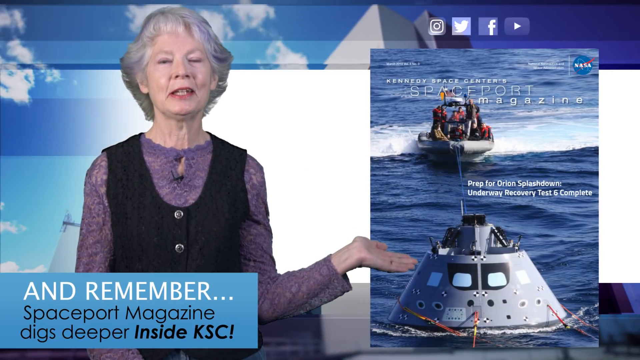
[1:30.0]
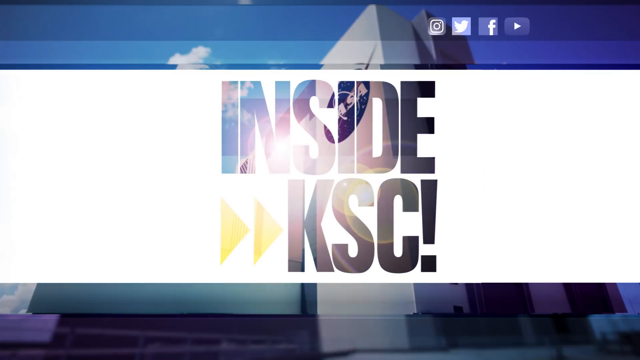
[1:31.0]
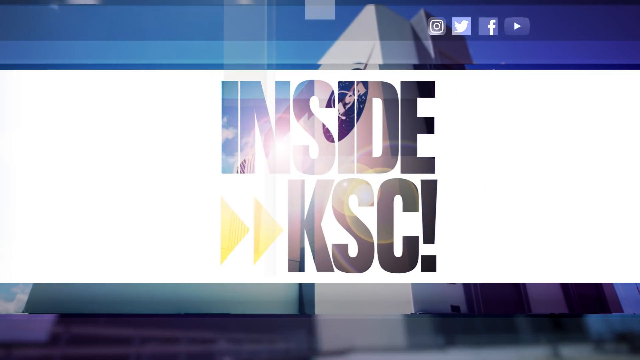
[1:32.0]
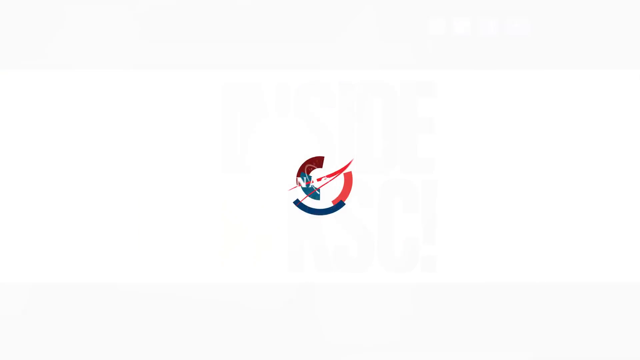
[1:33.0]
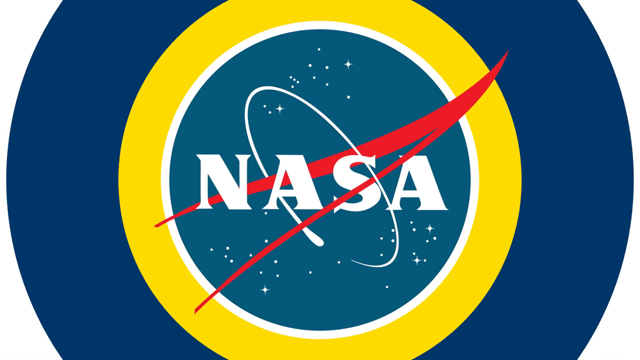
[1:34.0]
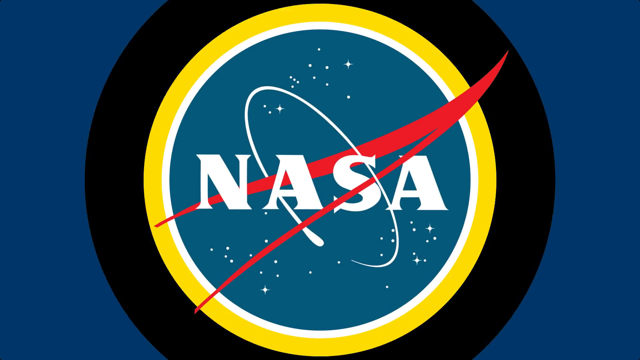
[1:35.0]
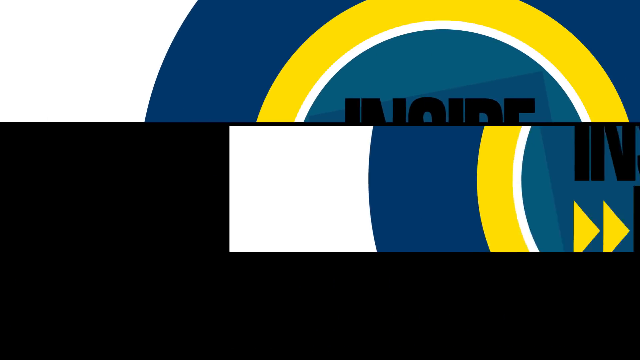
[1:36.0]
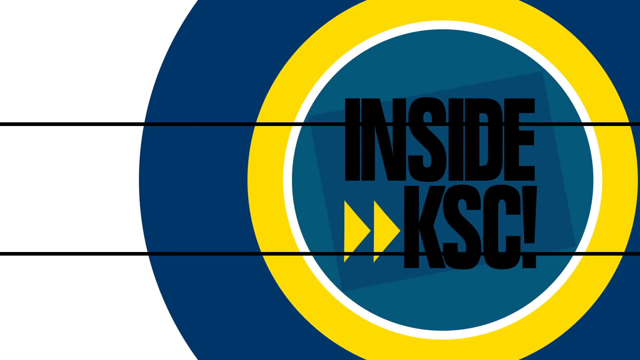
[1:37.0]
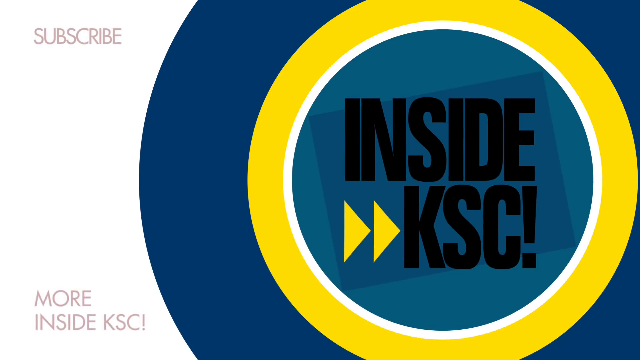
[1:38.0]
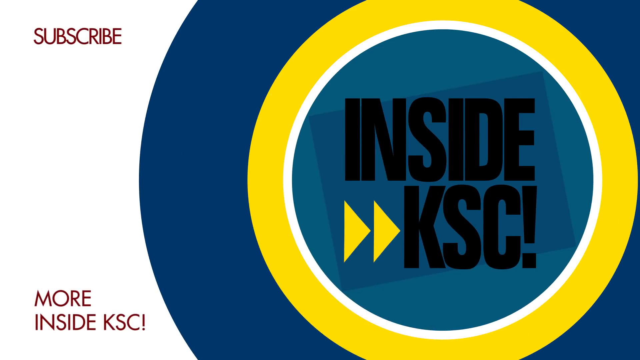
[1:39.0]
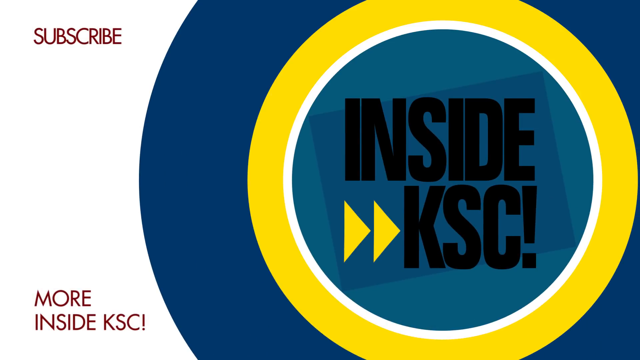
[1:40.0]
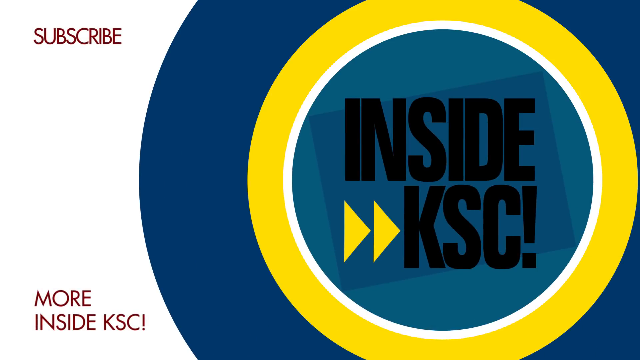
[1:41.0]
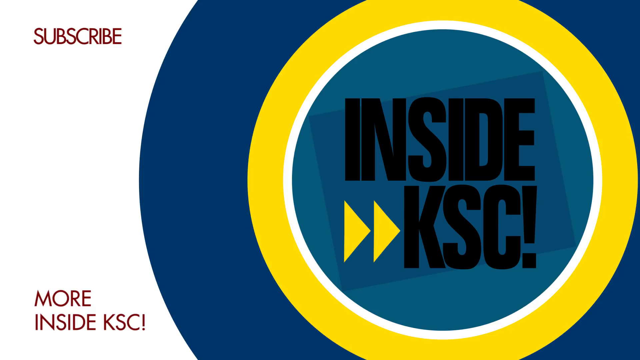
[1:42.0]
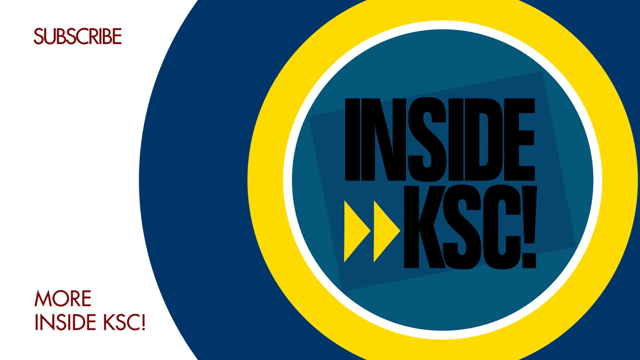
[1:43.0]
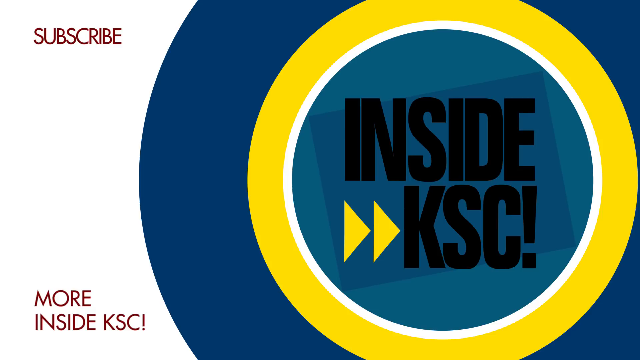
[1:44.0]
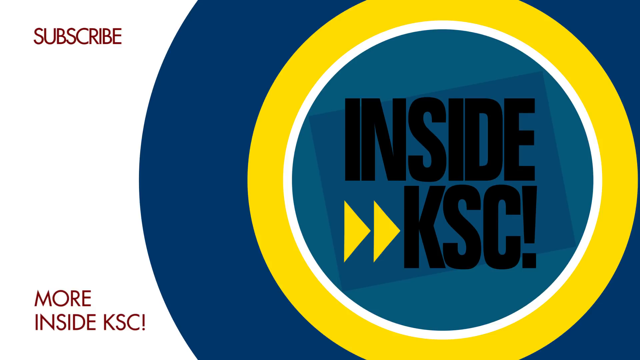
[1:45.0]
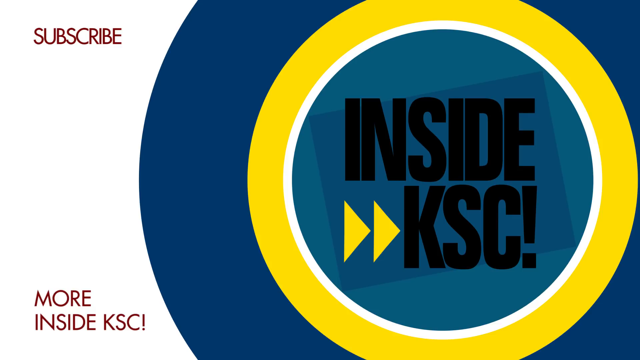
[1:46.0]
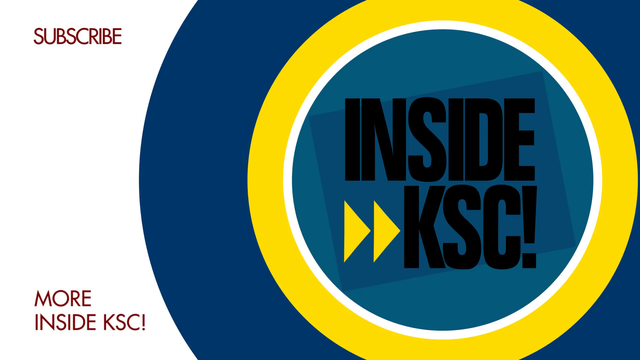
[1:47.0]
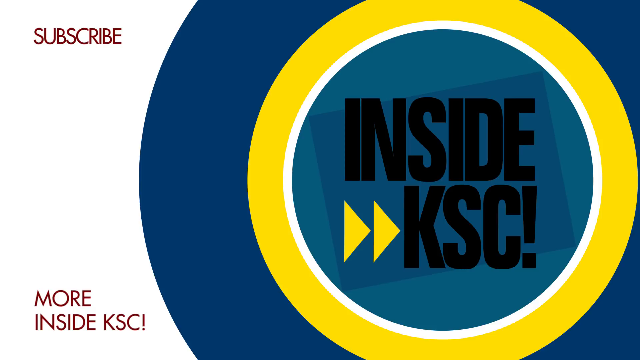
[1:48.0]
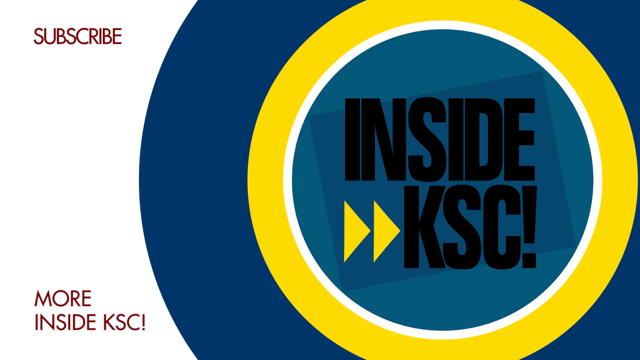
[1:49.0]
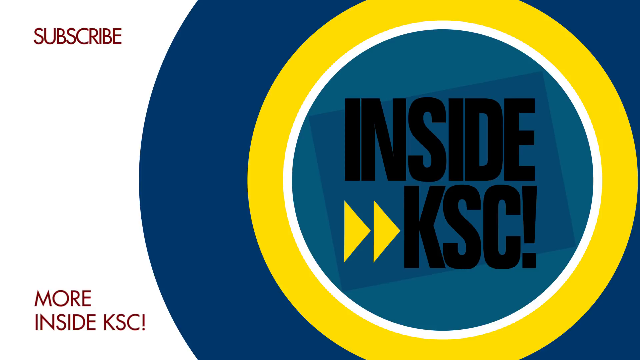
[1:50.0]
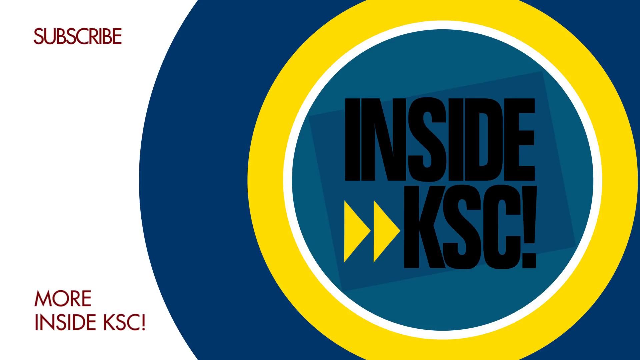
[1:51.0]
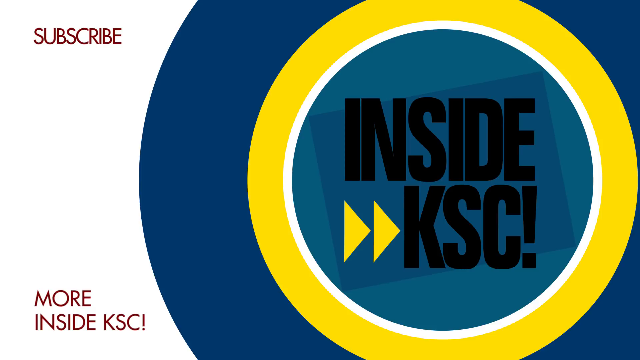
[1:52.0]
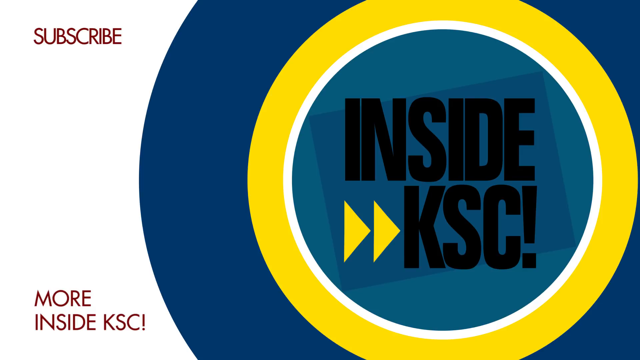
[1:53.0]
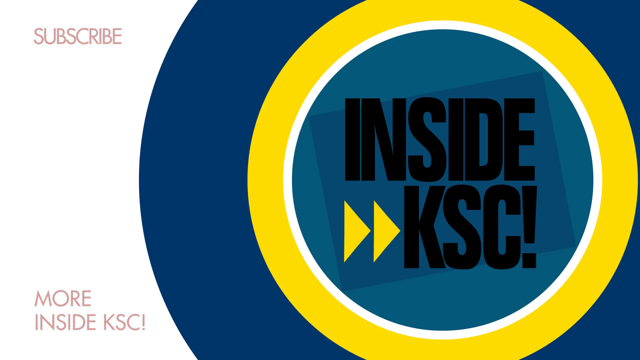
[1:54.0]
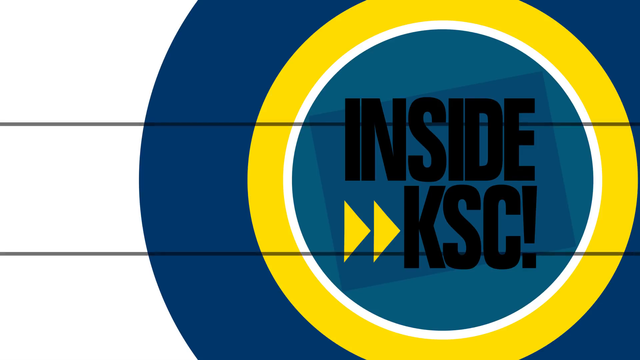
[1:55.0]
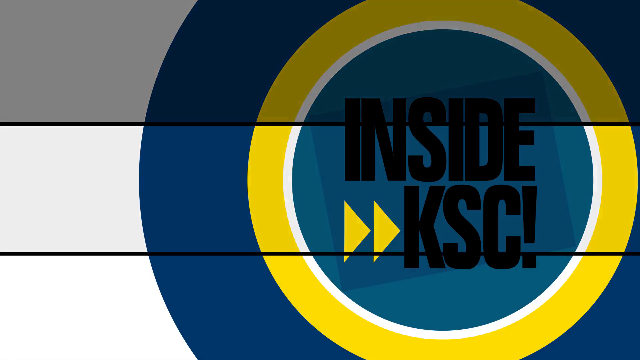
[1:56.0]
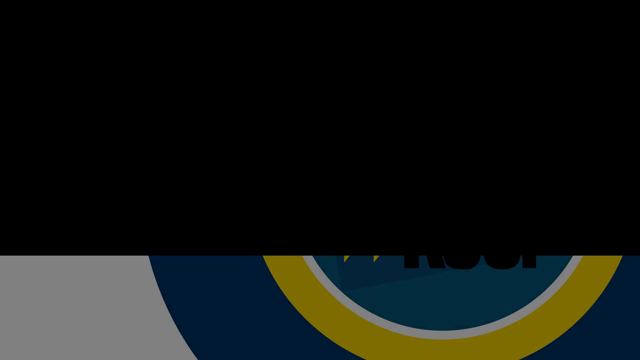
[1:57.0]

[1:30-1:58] The older woman is on the left with a blue green-screen background behind her. The video cuts to a white rectangular box in the middle of the screen with the text "inside KSC!" The text is transparent, showing a background image behind it that appears to be some sort of rocket. Next, a white screen shows the NASA logo in the center, surrounded by a thin white circle, a slightly larger yellow circle, and a much larger blue circle. Then another screen appears with white on the left and right and the text "inside KSC" surrounded by a light blue circle, a white circle, a yellow circle, and a dark blue circle. This screen stays up for quite a while and seems to be an end screen: the word "subscribe" pops up in red in the top left against the white background, and at the bottom "more inside KSC" appears in red against the white background. The video then fades to a black screen.